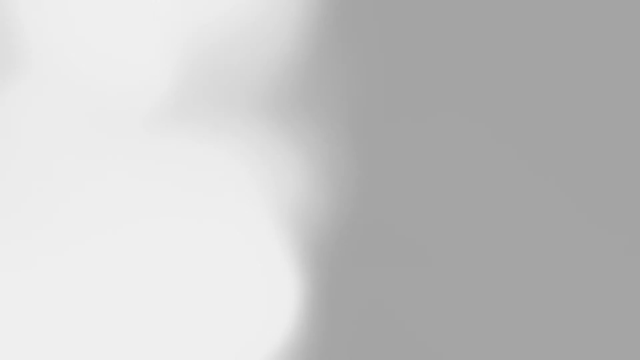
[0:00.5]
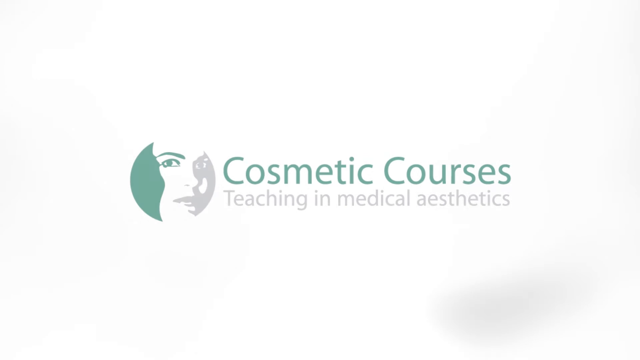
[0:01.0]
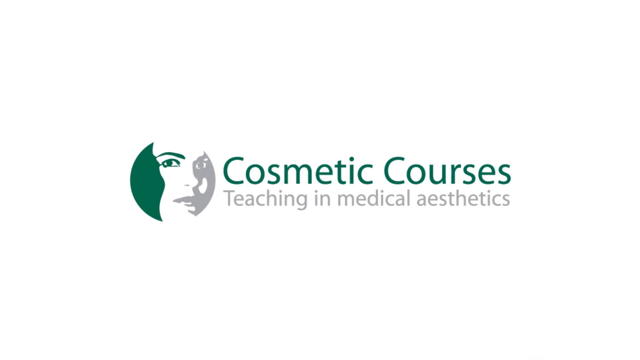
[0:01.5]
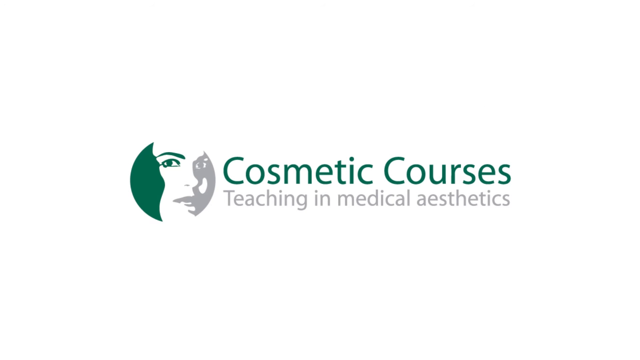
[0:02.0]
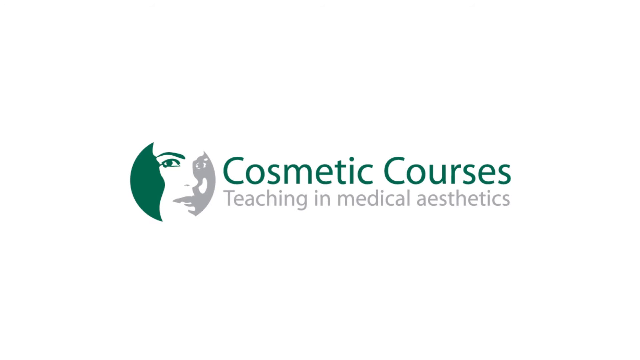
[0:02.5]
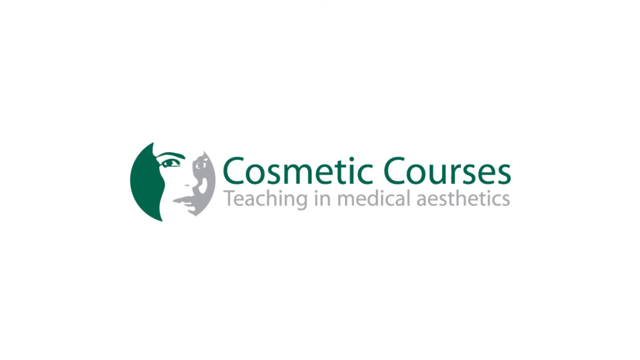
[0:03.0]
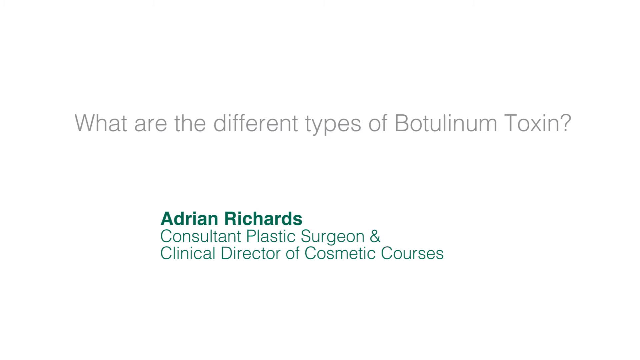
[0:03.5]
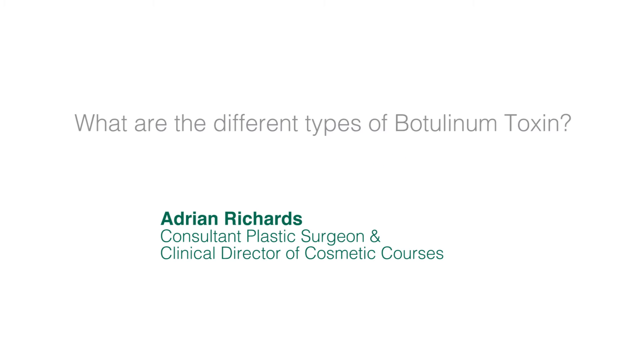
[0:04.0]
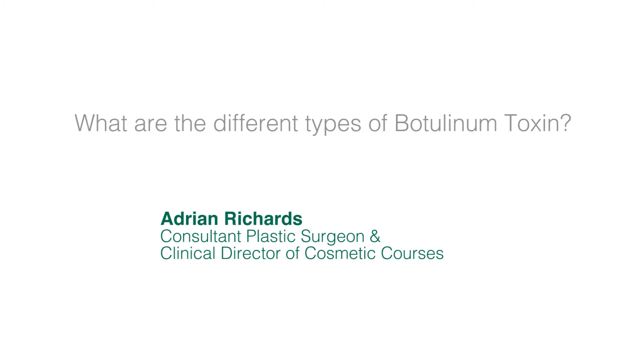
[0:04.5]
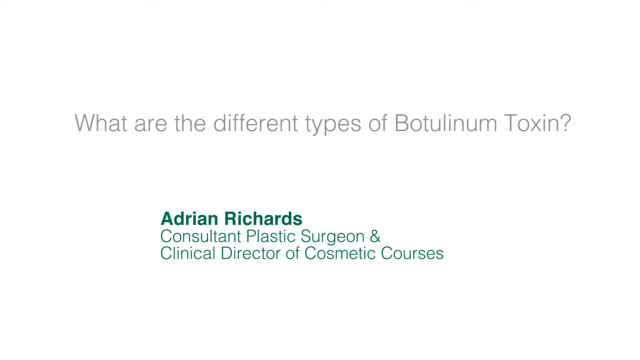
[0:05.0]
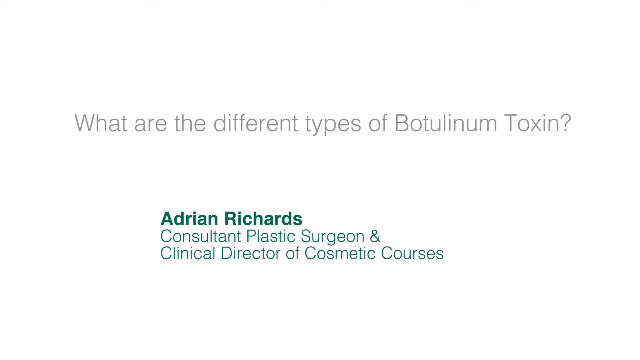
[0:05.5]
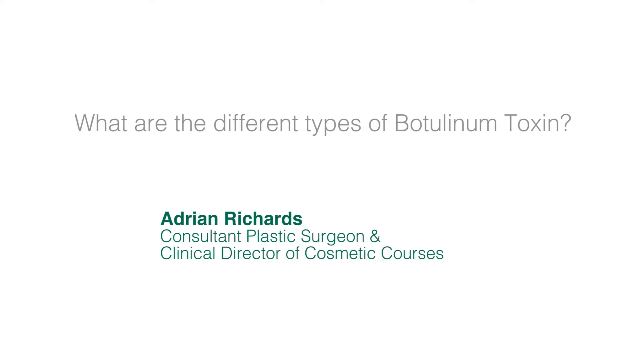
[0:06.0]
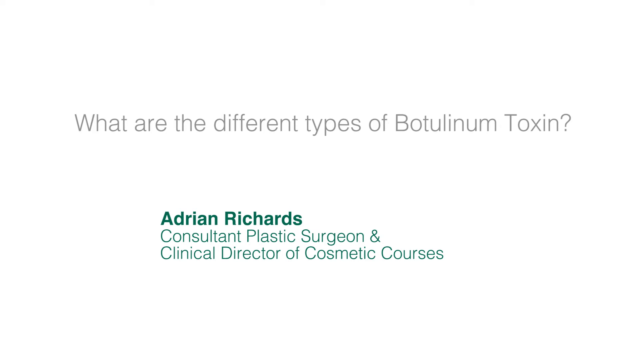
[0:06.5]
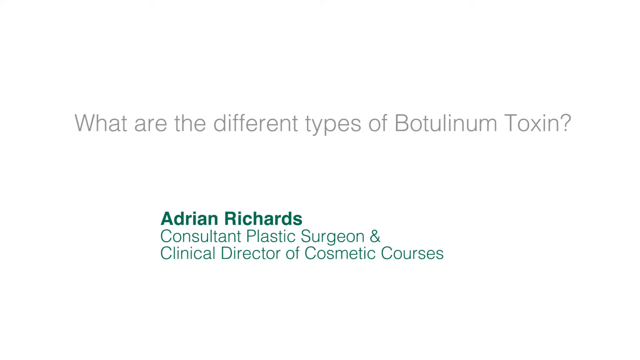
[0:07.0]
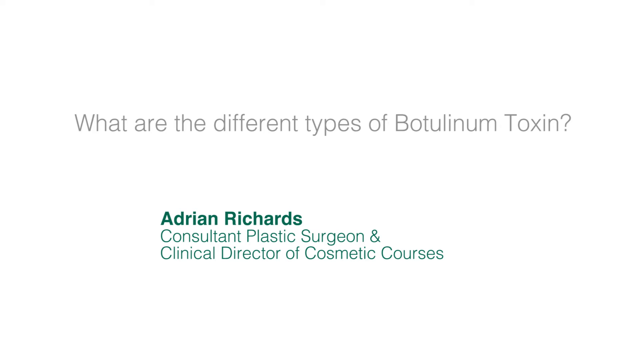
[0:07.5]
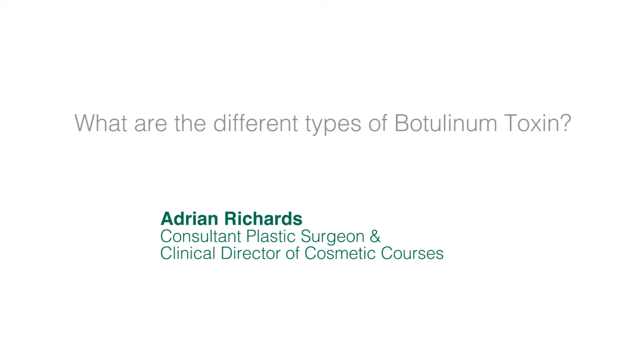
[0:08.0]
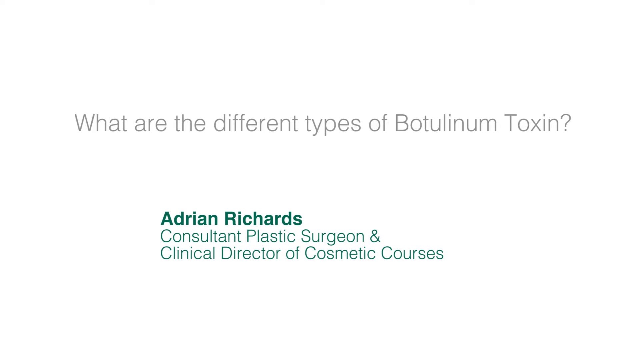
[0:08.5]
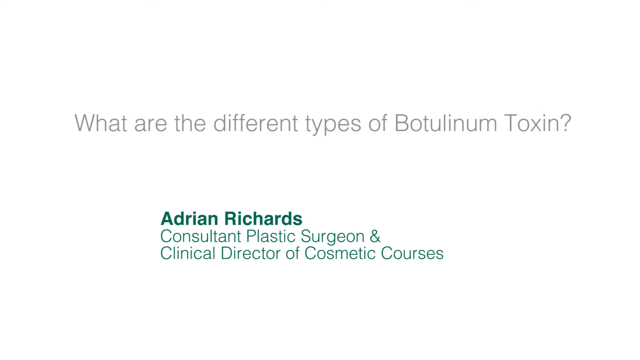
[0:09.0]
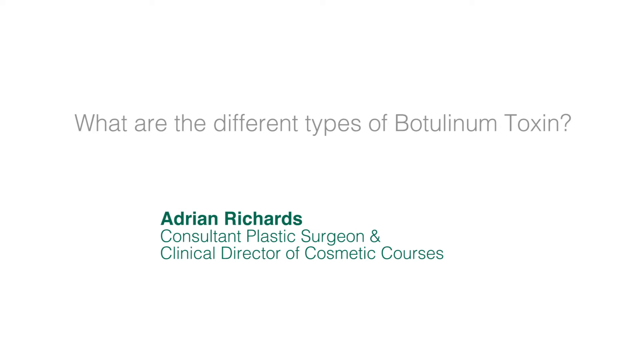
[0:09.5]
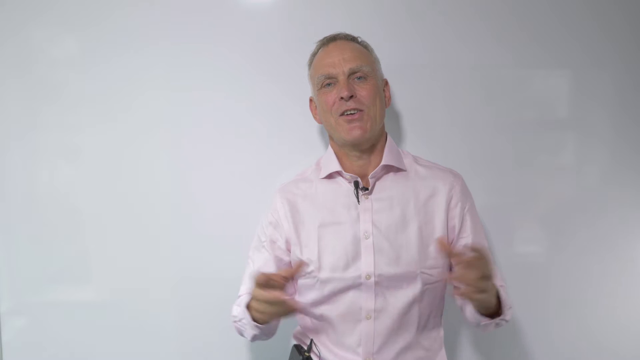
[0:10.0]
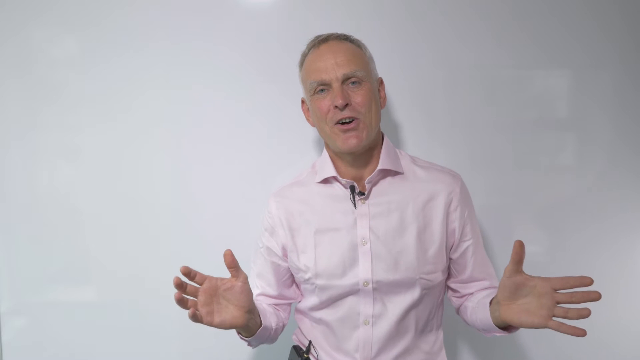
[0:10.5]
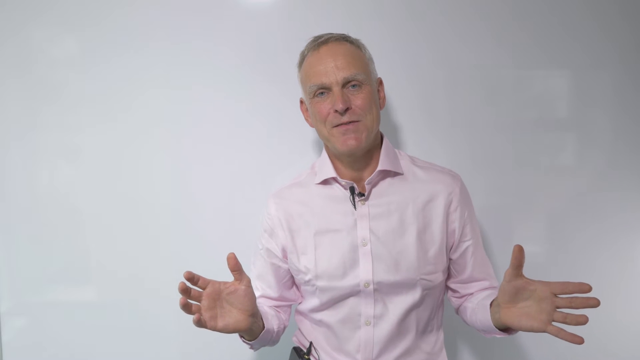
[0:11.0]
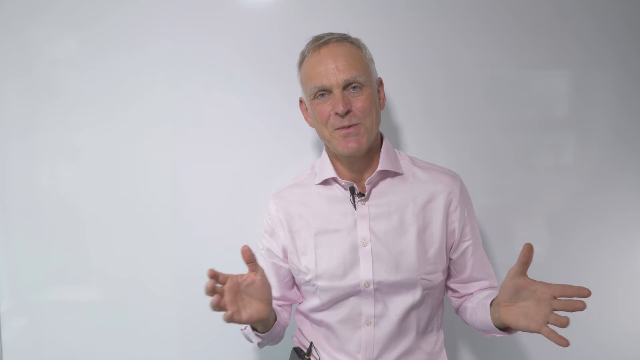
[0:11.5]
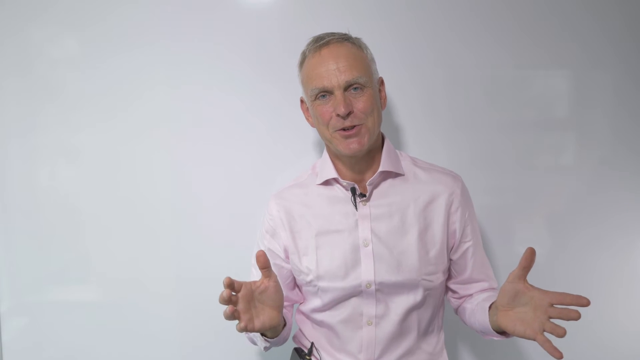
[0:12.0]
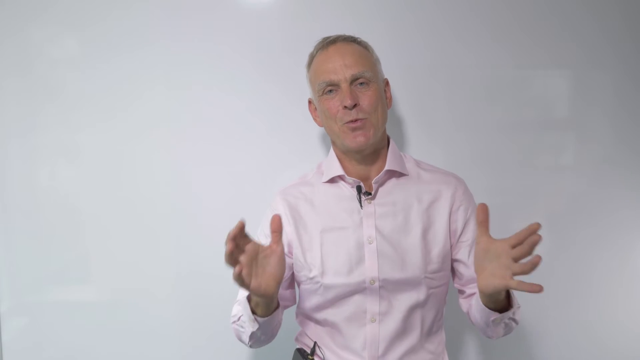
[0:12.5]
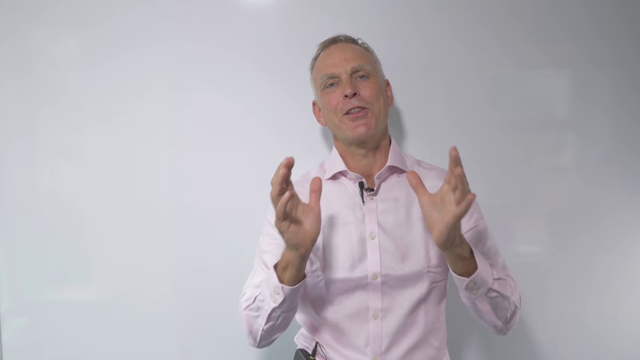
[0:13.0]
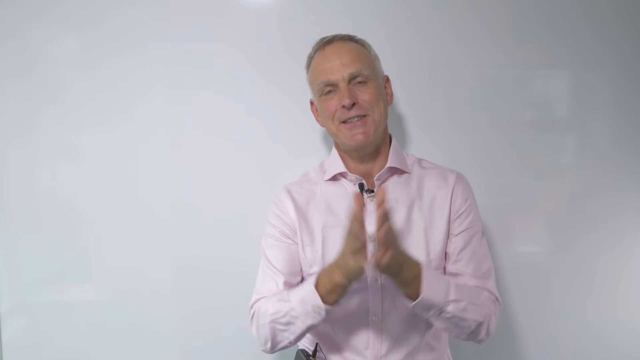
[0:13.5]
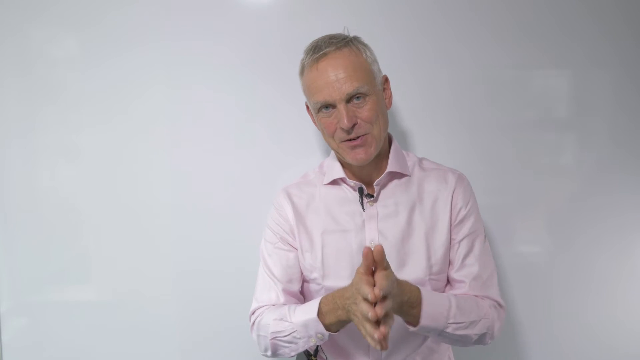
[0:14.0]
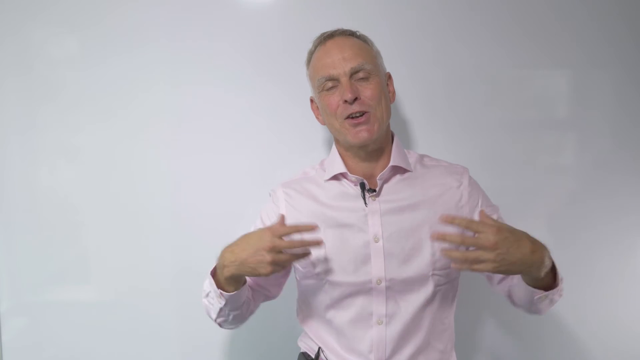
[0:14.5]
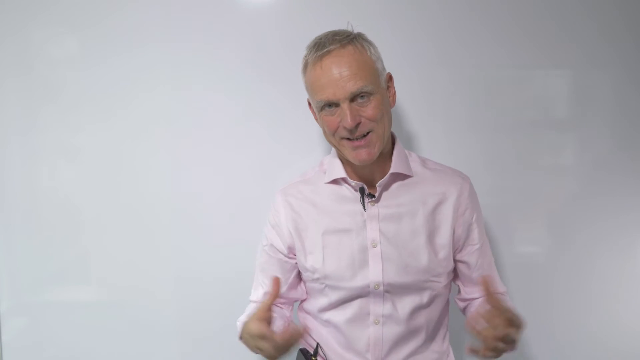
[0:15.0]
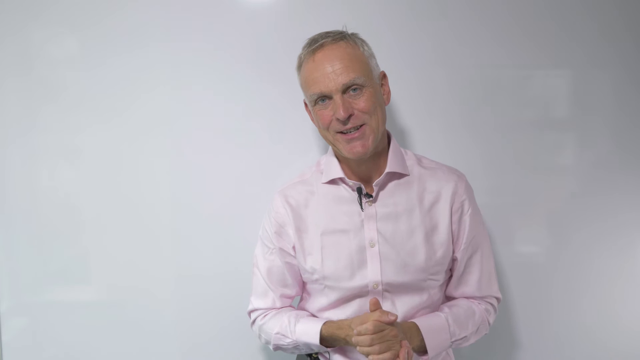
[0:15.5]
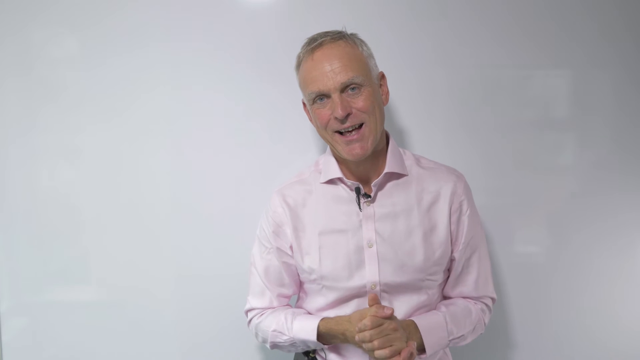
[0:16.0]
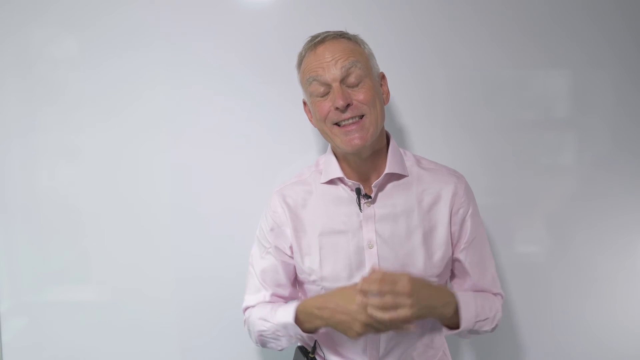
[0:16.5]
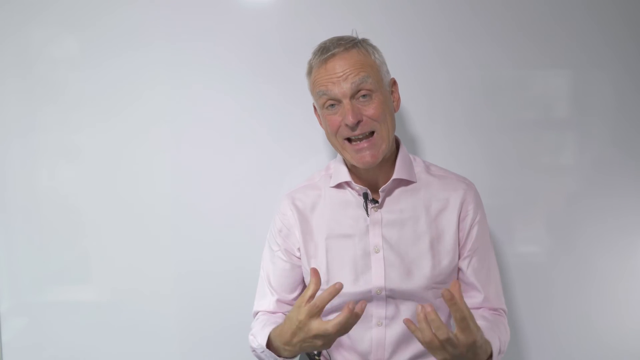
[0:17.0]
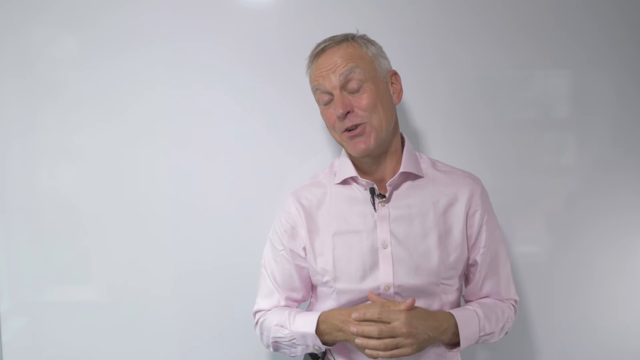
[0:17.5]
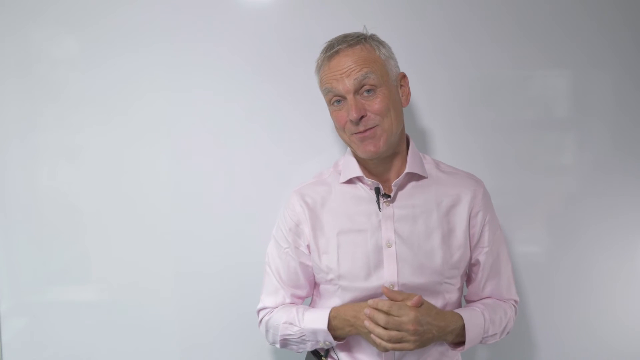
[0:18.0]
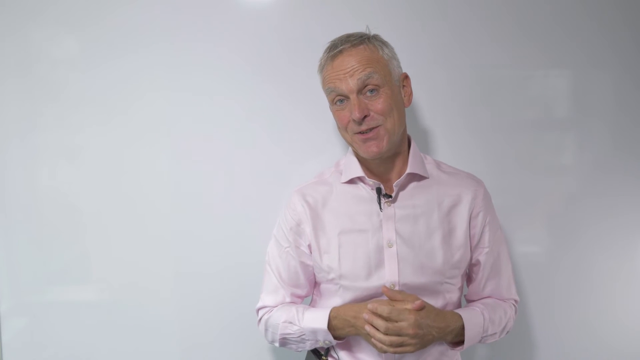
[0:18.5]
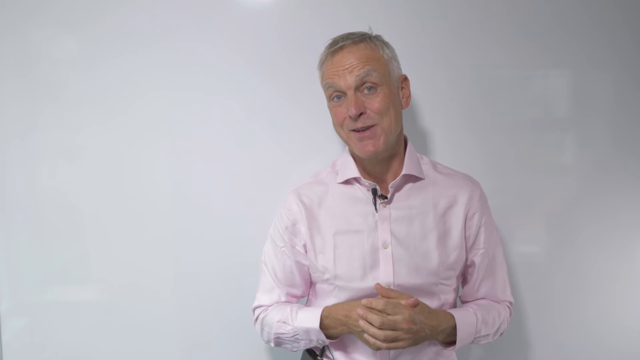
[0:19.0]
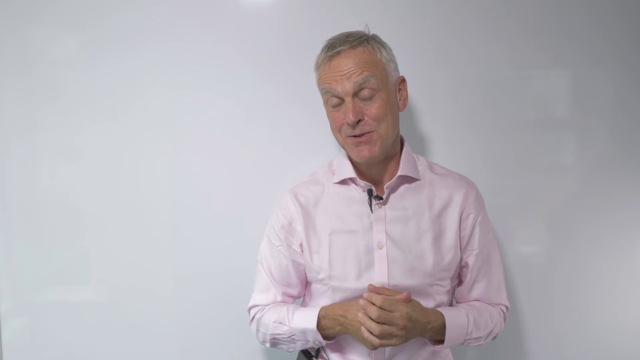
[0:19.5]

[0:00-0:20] The video opens on a white screen with "Cosmetic Courses" in dark green in the middle. Beneath it, in a smaller light gray font, is "Teaching and Medical Aesthetics," and to the left is a circle icon that looks like a drawing of a close-up of a woman's face. The screen then changes to a plain white background with "what are the different types of botulinum toxin?" in light gray in the middle. Toward the bottom, in dark green, is "Adrian Richards," with "Consultant Plastic Surgeon and Clinical Director of Cosmetic Courses" underneath. Next, a man stands in front of a white wall, seen from the waist up. He wears a light pink button-up shirt and looks like an older Caucasian man with short light gray hair that is a little darker on top and whiter on the sides. He speaks to the camera with both hands held out in front of him to the side, palms showing, then brings his hands together in something like a clapping motion. He puts his hands out to the side again before bringing them together in front of him with his fingers clasped. His face is very expressive, with large blue eyes and raised eyebrows as he speaks.